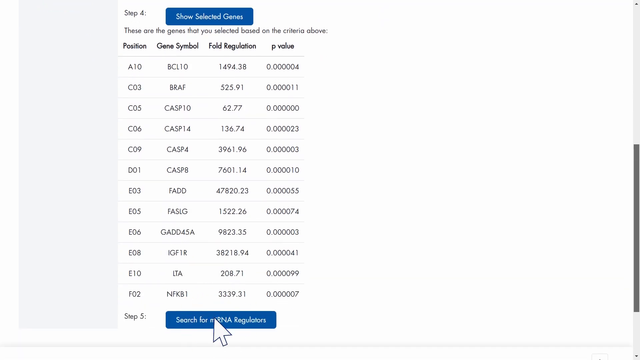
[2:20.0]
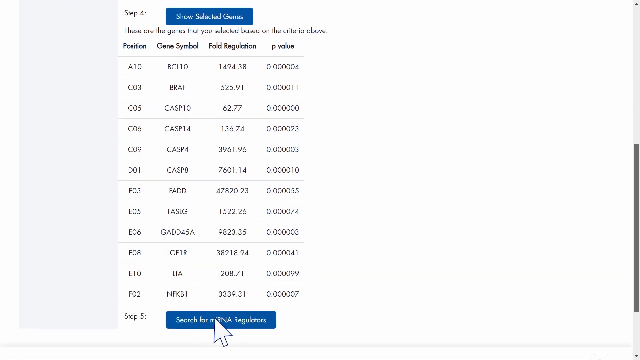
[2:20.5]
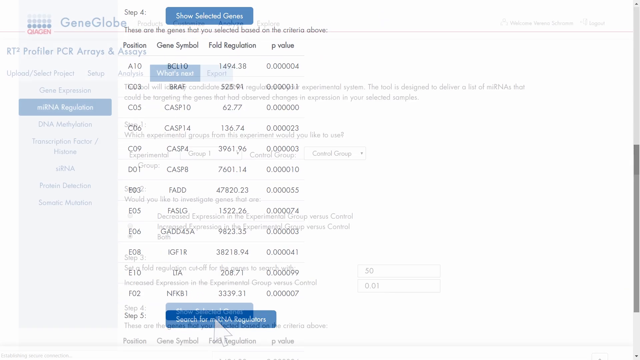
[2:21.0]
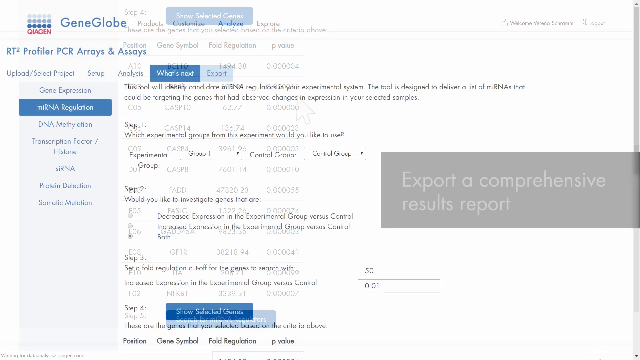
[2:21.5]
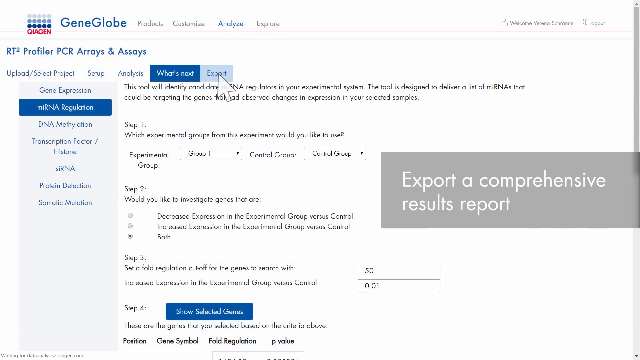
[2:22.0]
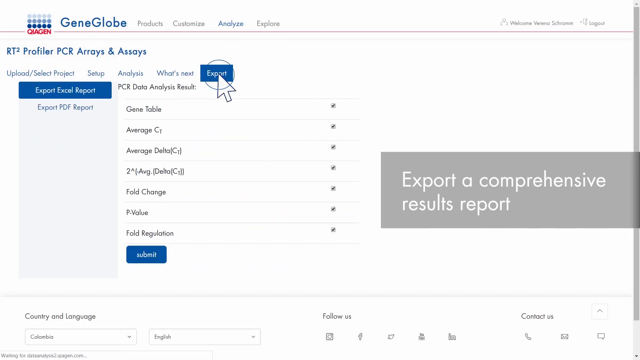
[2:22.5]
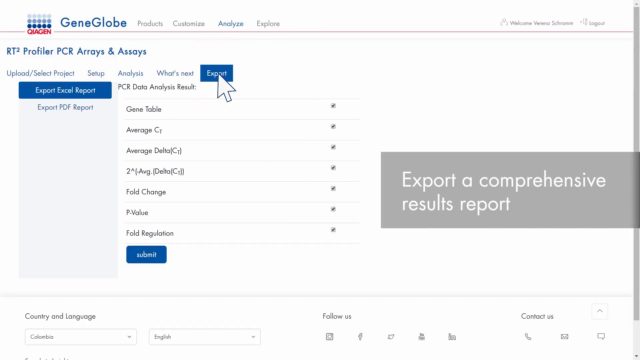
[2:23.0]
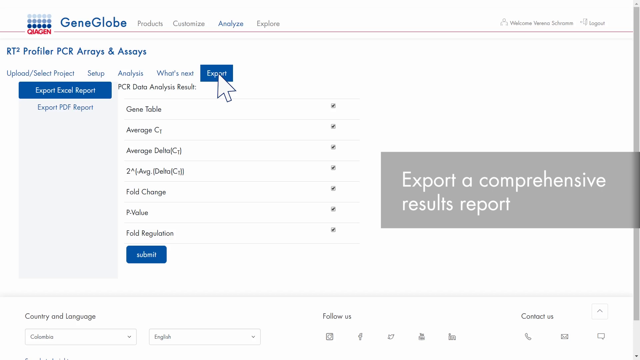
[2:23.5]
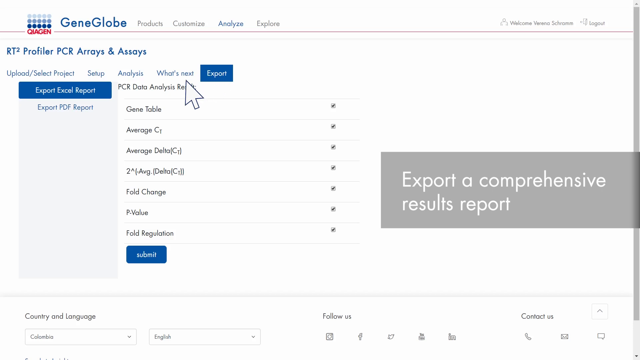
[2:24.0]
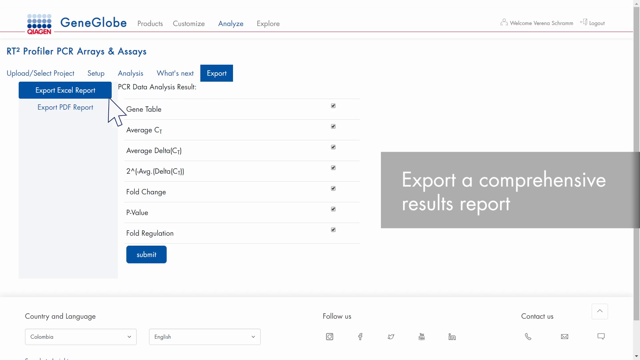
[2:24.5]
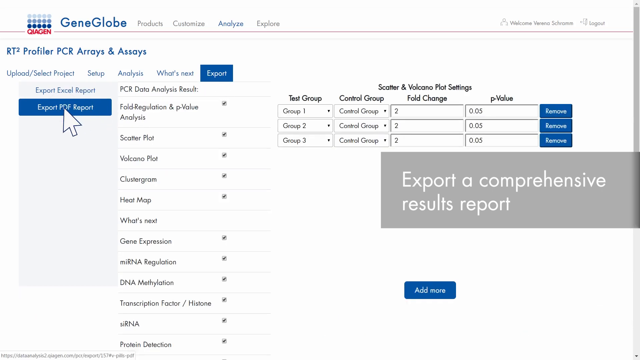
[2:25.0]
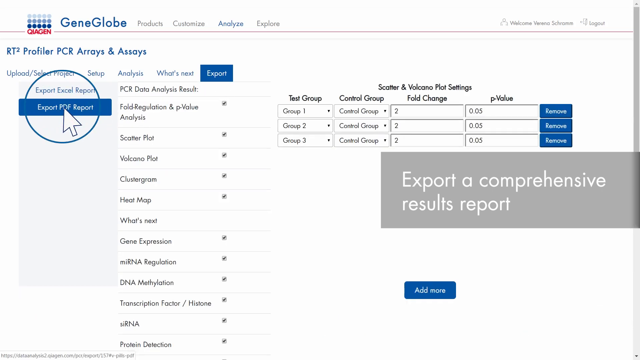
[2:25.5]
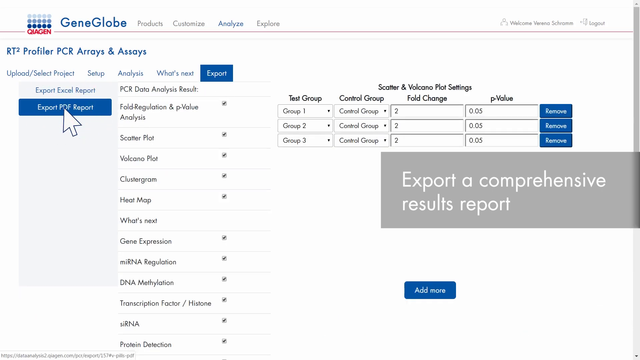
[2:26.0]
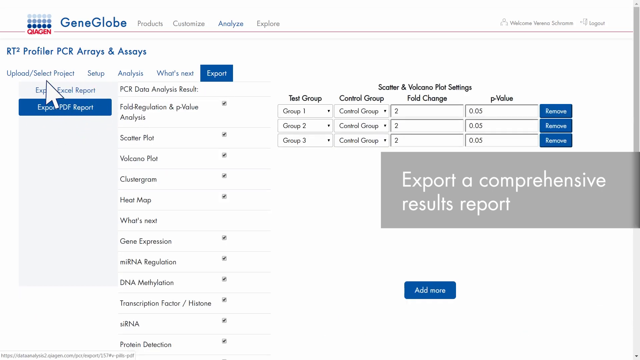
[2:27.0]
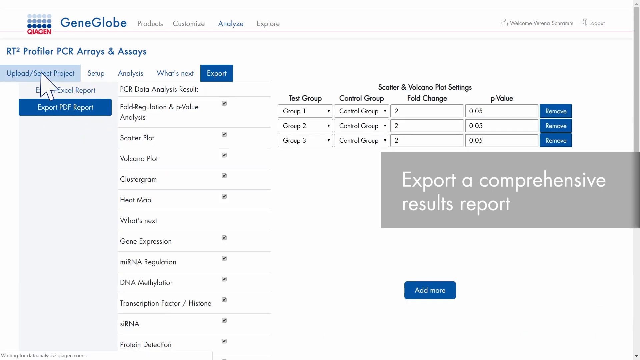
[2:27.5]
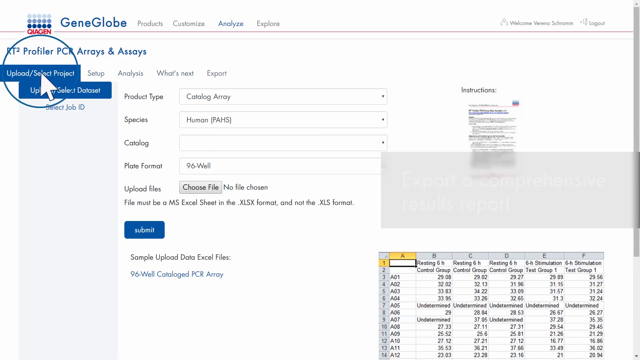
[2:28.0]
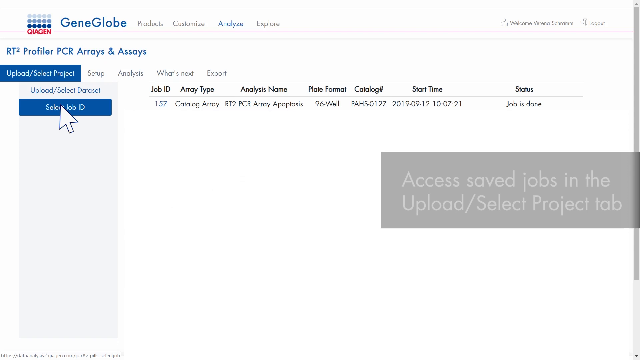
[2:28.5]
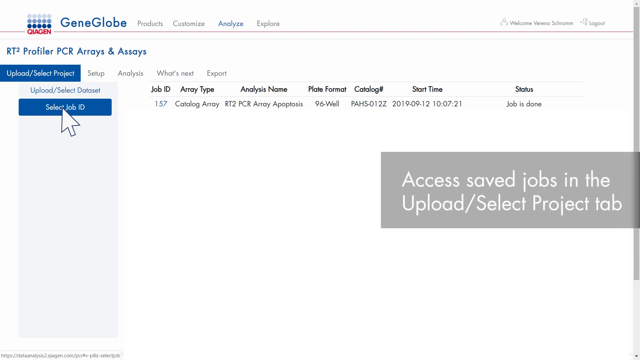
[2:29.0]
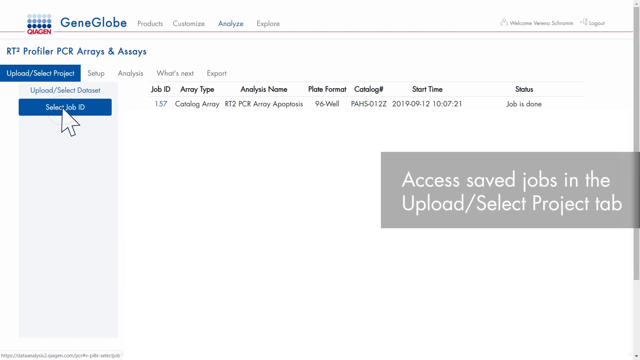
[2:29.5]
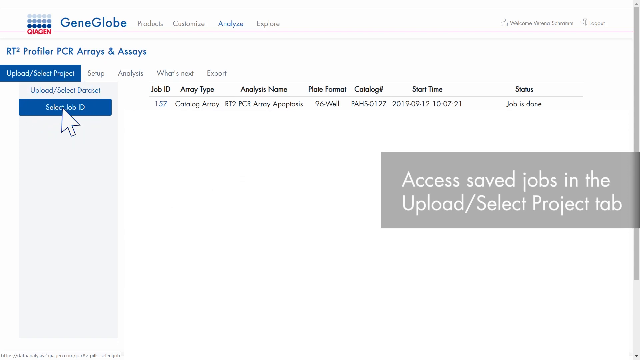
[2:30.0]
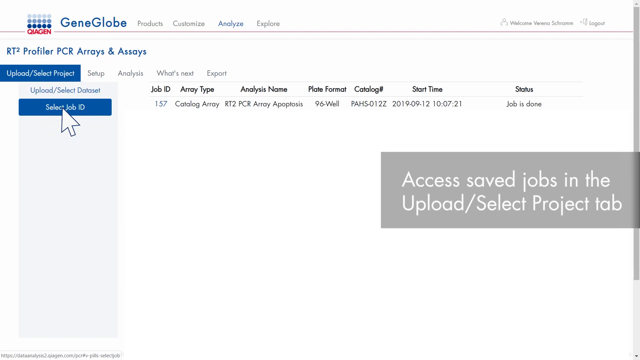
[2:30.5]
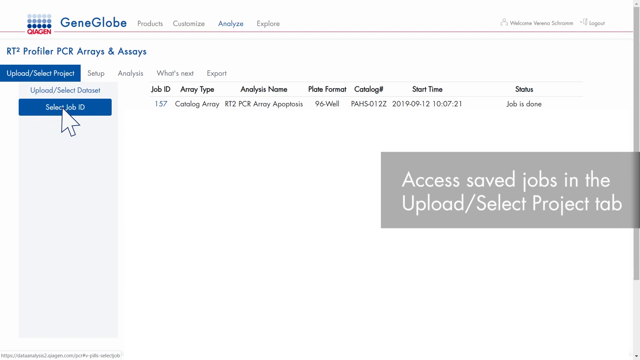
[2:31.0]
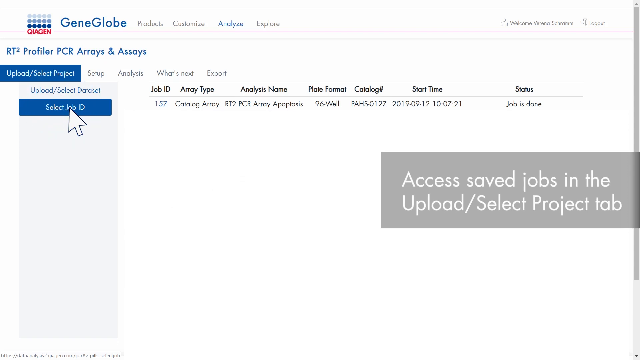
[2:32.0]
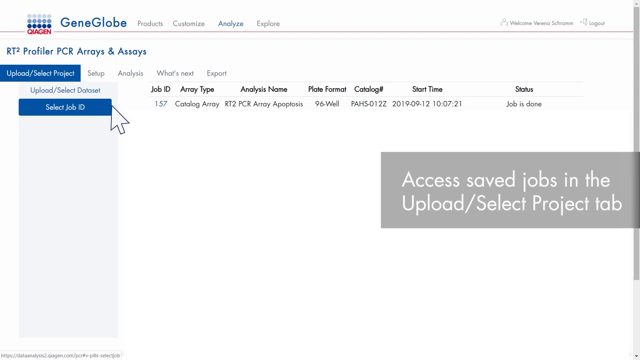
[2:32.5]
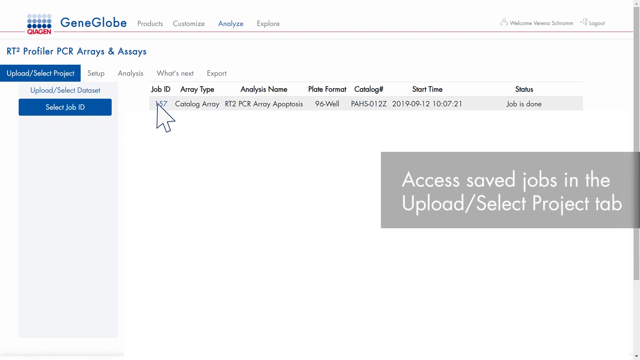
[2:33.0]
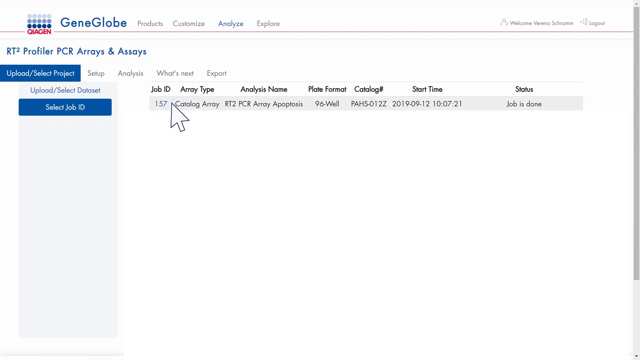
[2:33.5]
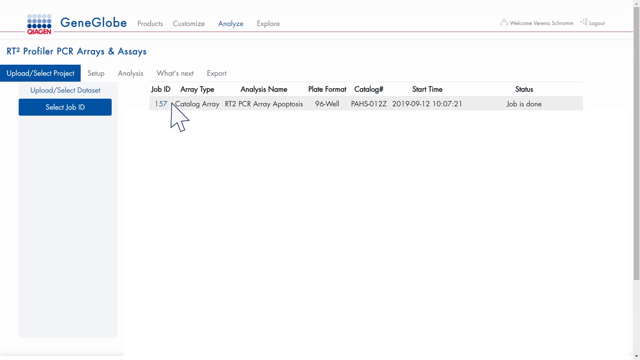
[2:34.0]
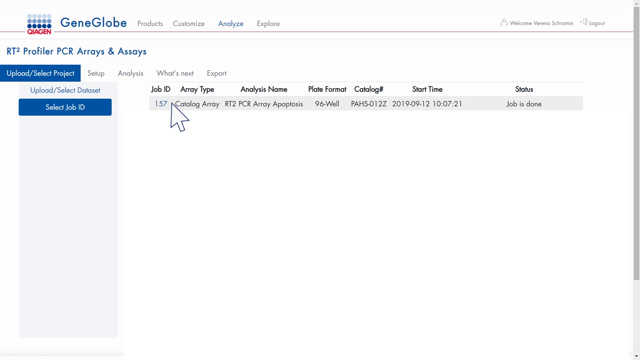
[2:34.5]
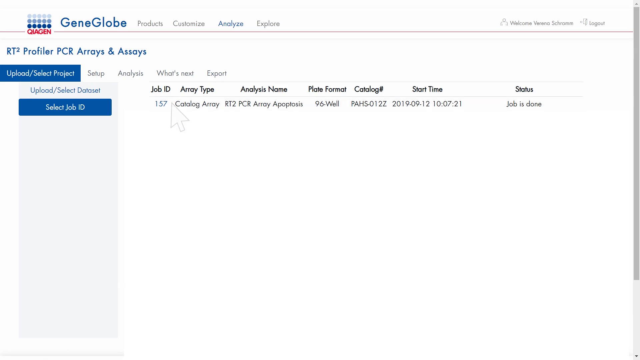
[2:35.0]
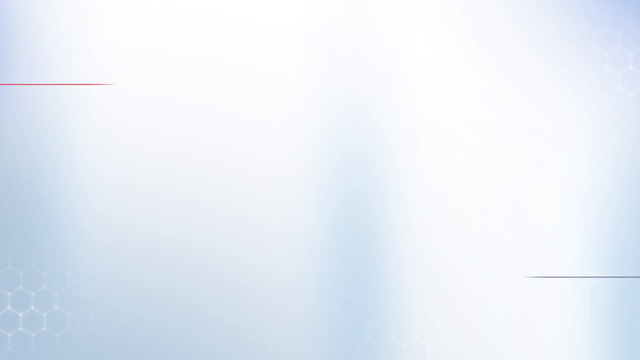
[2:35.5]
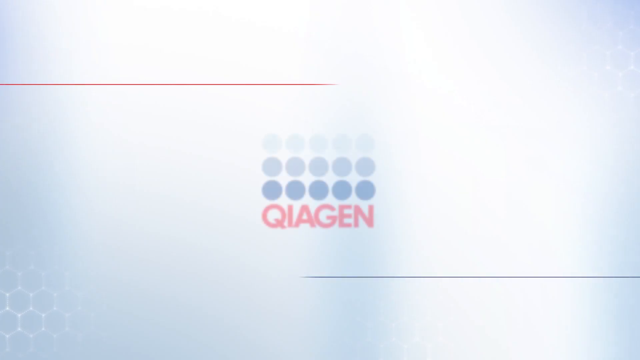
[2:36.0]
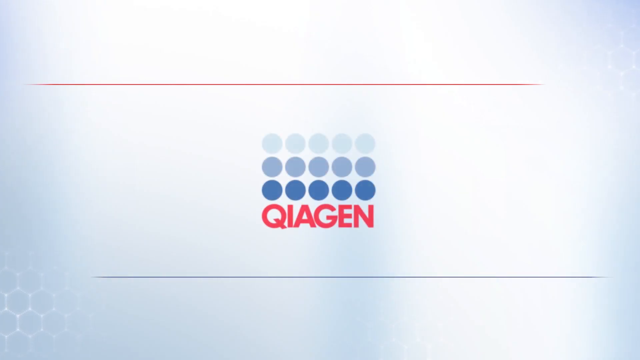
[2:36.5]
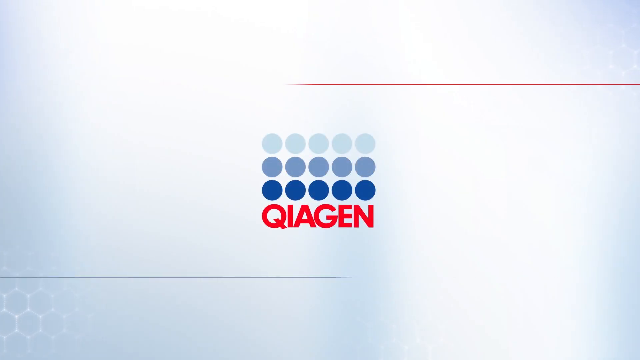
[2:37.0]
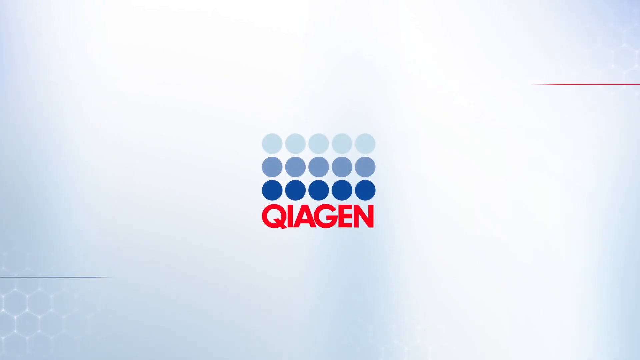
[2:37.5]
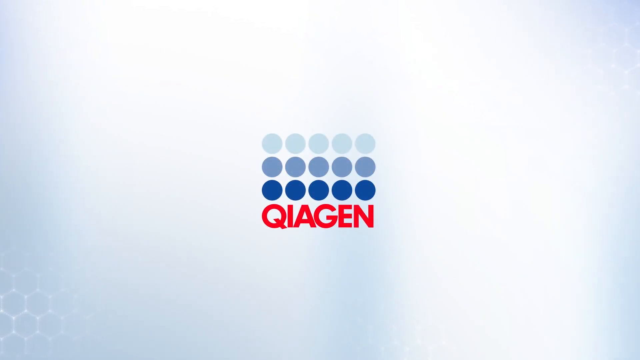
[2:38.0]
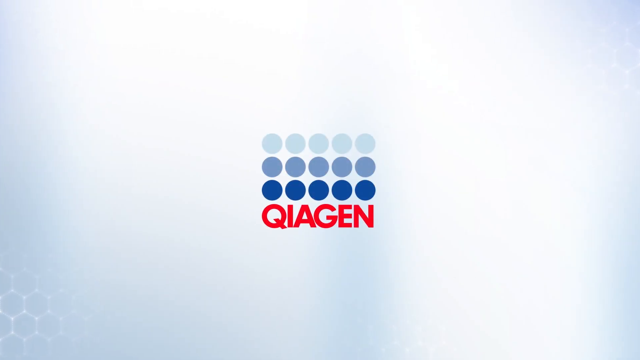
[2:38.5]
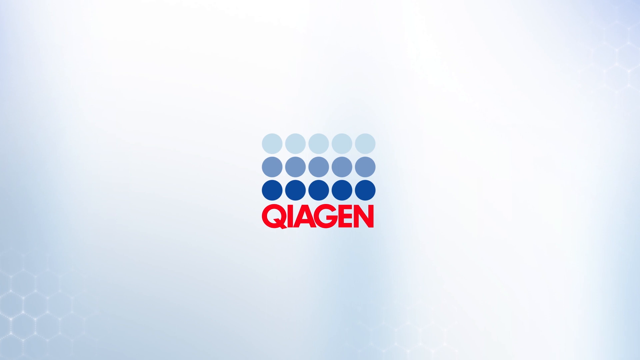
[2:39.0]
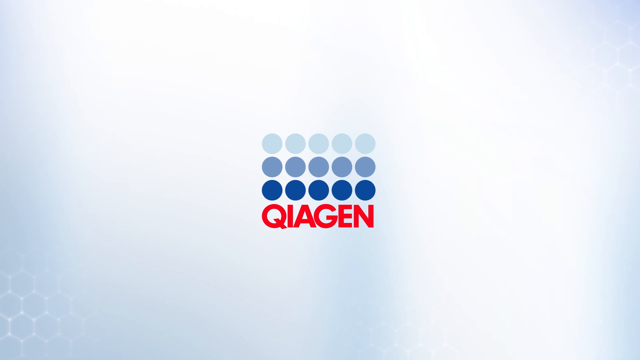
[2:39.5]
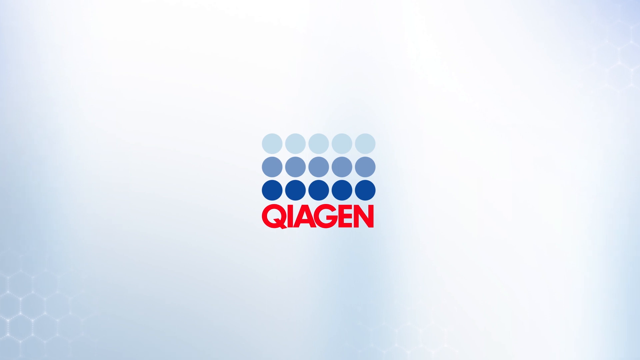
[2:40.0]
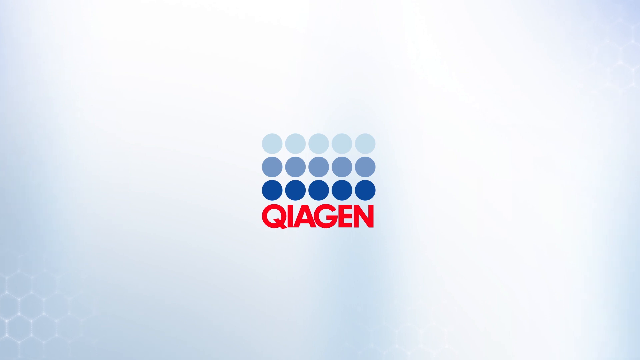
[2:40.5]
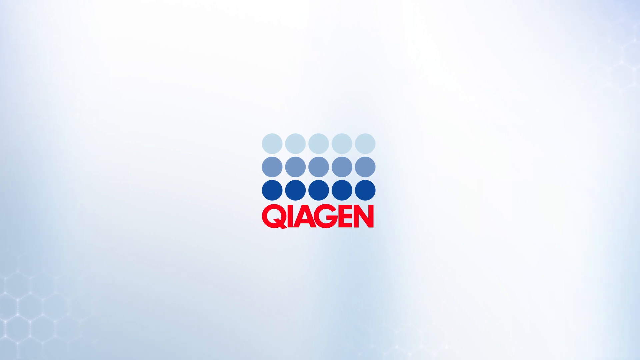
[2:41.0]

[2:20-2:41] mRNA Regulators is selected at the bottom of the screen where it says "Step 5". Above, "Step 4" shows selected genes, chosen based on the criteria of position, gene symbol, result, regulation and value. Another option, "Export", is then shown. On the right side of the page it says "Export a comprehensive results report", at the bottom left it shows "Export Excel report", and the mouse is on "Export PDF report". Job ID is then selected, showing job ID 157, array type catalog array, an analysis name beginning "RT2", plate format 96-well, status "Job is done", and catalog P-A-H-S-0-1-2-7. Finally, five circles stacked in three rows appear on a white page with the text "QIAGEN", which stays on screen for quite a few seconds before the video ends.